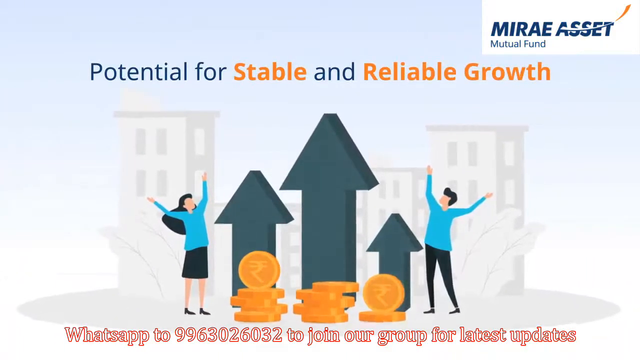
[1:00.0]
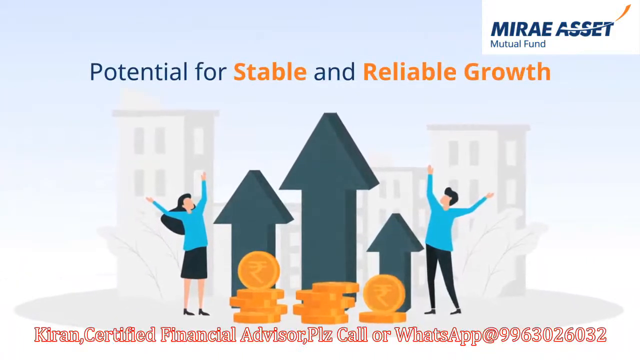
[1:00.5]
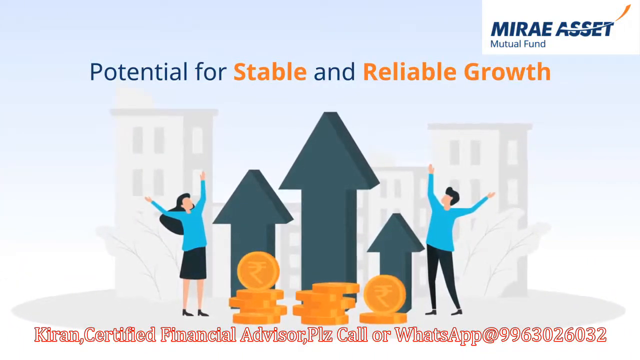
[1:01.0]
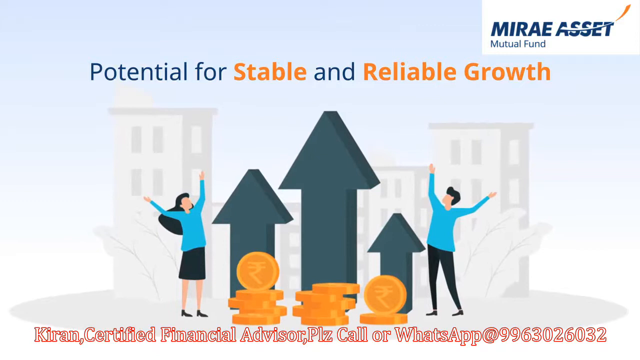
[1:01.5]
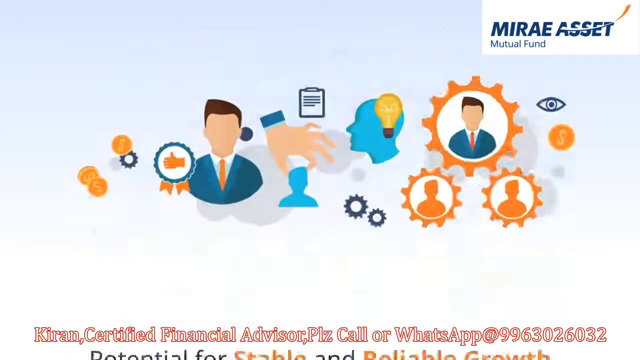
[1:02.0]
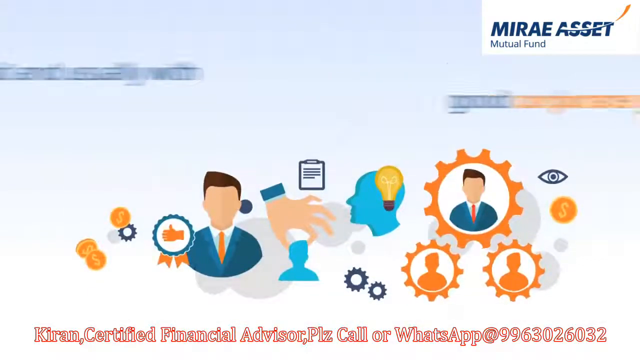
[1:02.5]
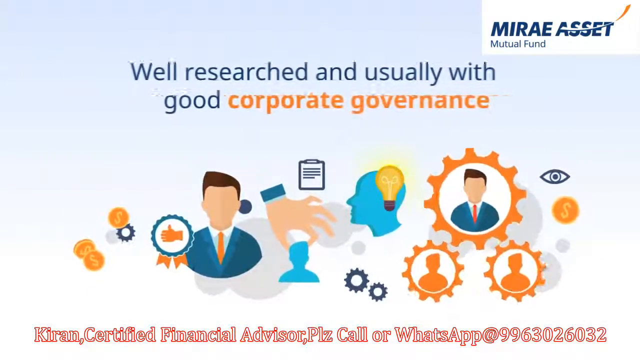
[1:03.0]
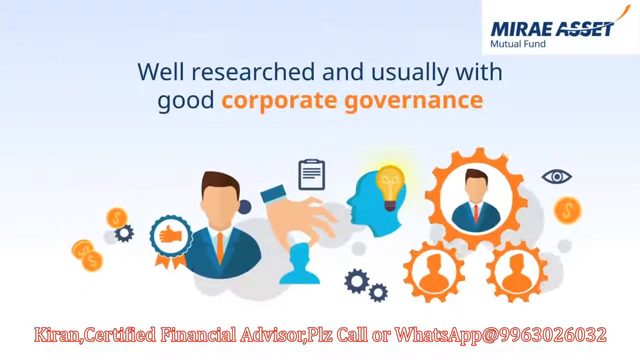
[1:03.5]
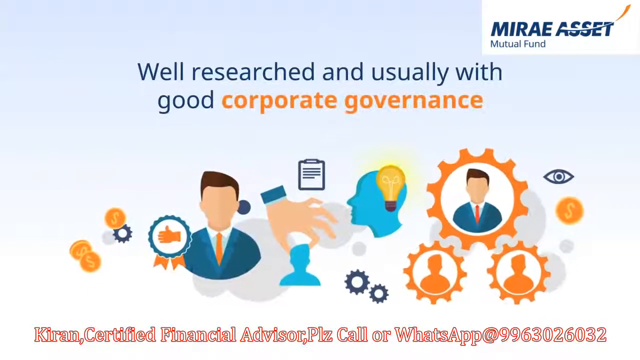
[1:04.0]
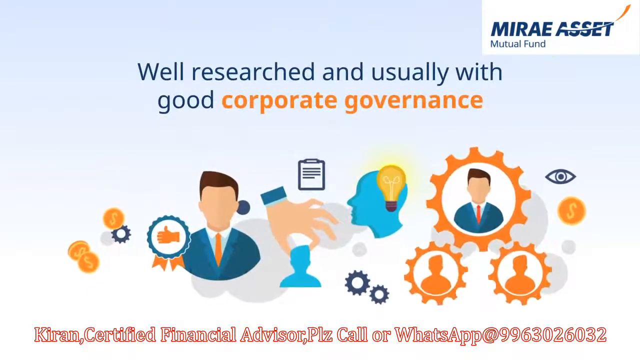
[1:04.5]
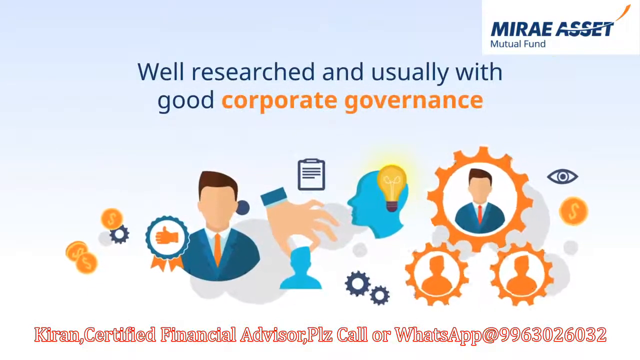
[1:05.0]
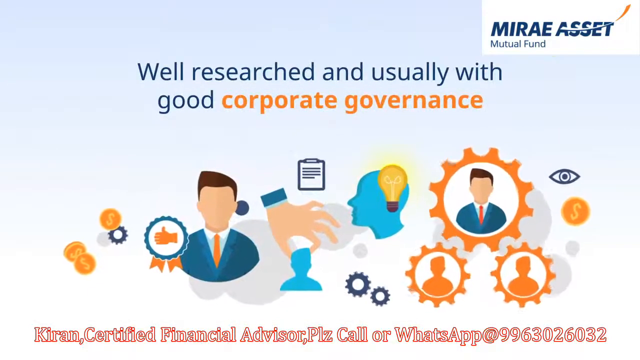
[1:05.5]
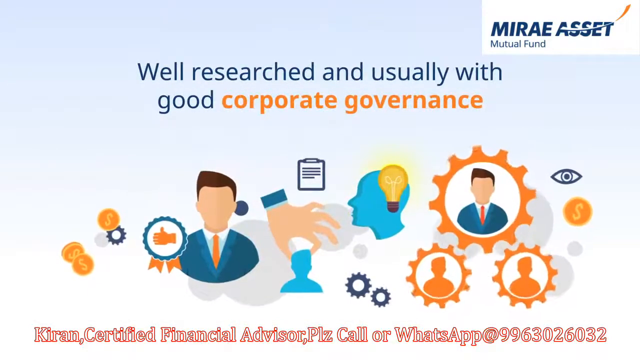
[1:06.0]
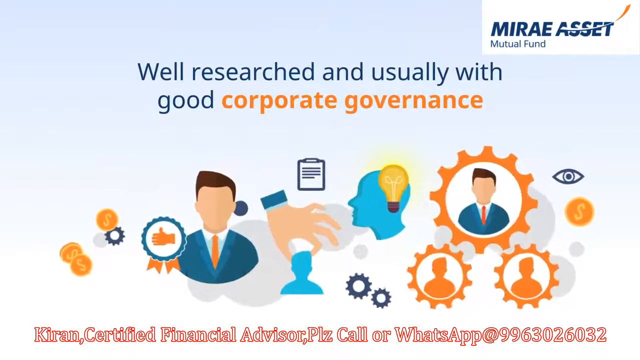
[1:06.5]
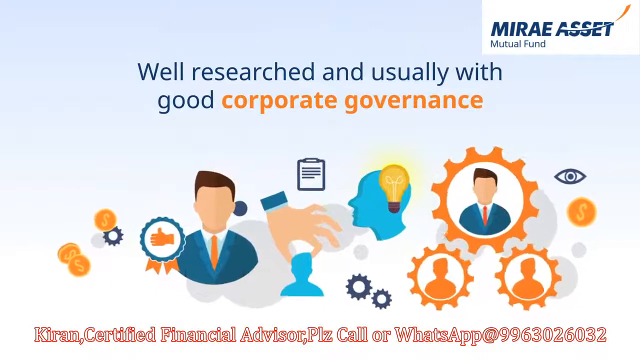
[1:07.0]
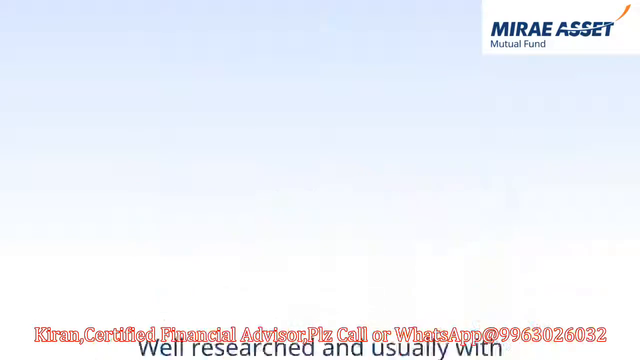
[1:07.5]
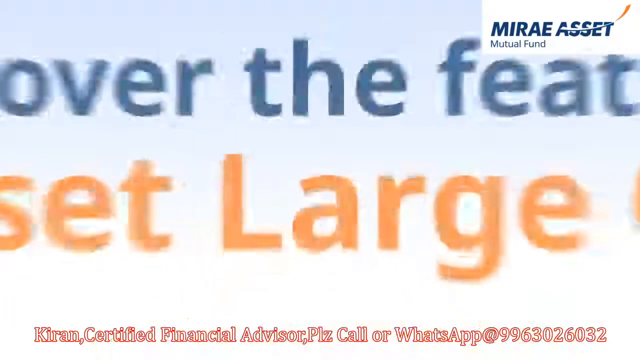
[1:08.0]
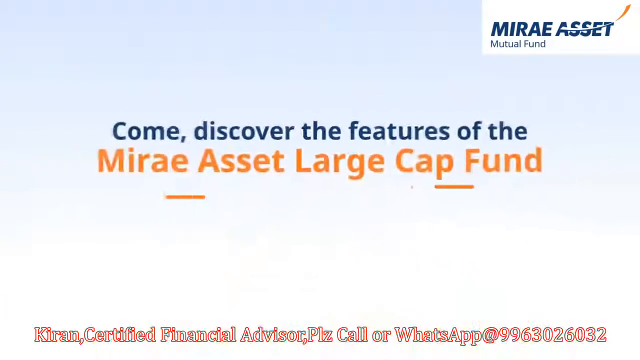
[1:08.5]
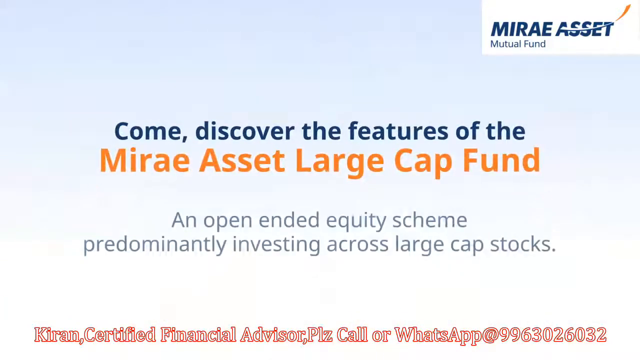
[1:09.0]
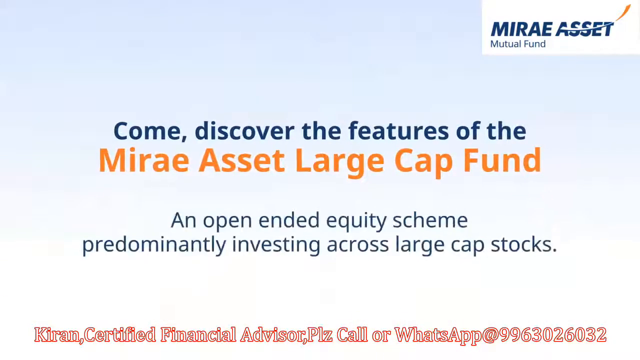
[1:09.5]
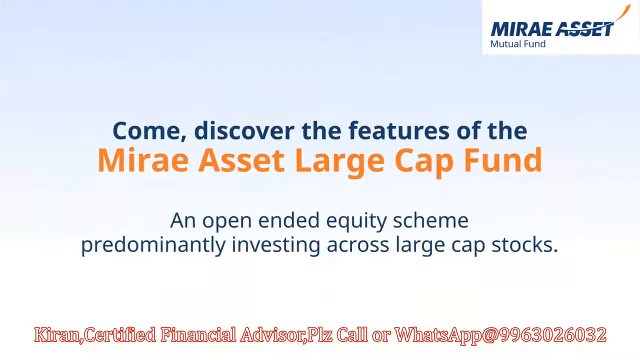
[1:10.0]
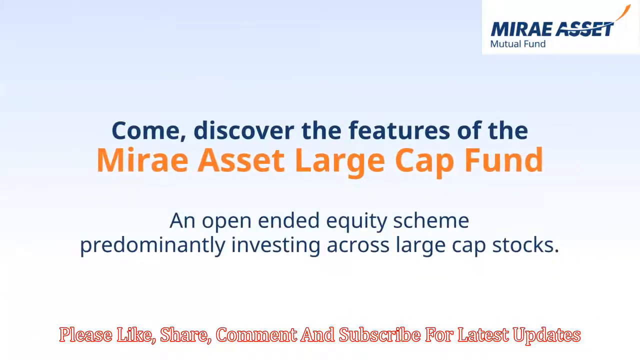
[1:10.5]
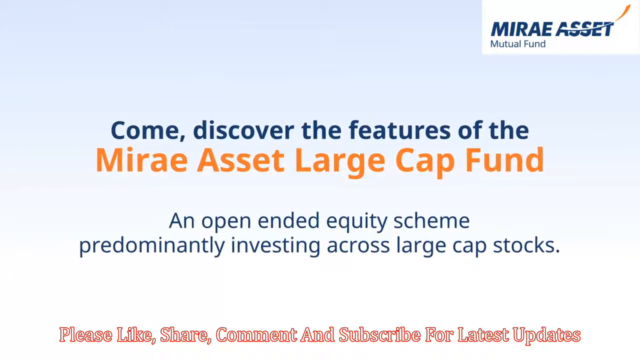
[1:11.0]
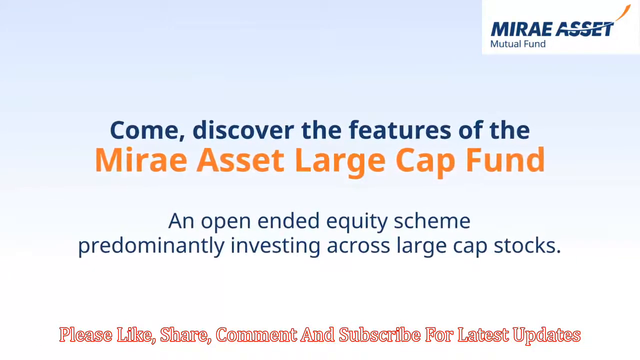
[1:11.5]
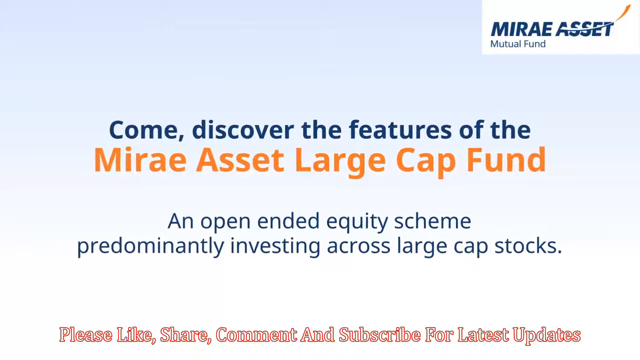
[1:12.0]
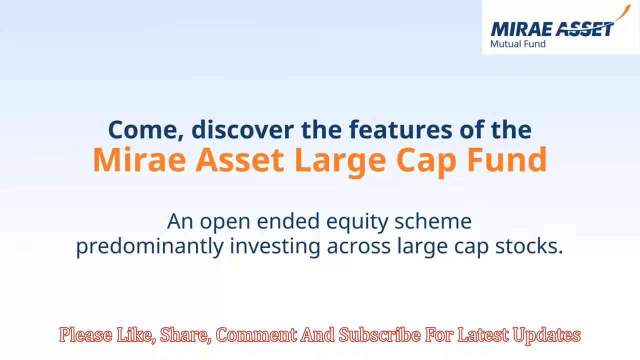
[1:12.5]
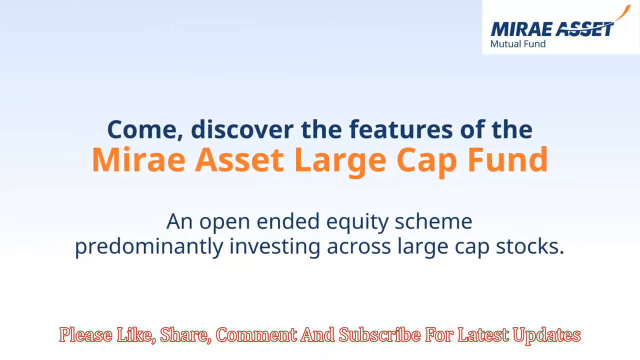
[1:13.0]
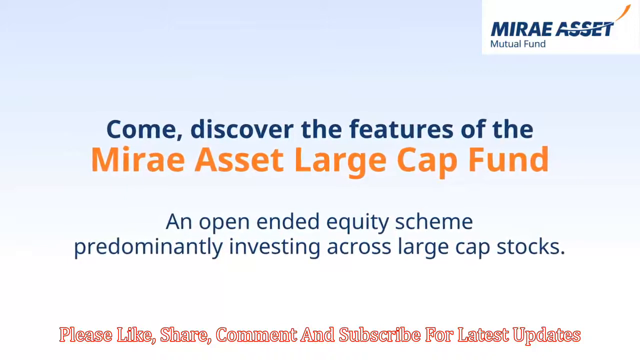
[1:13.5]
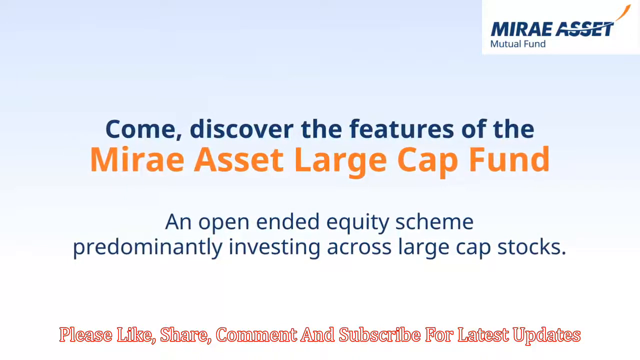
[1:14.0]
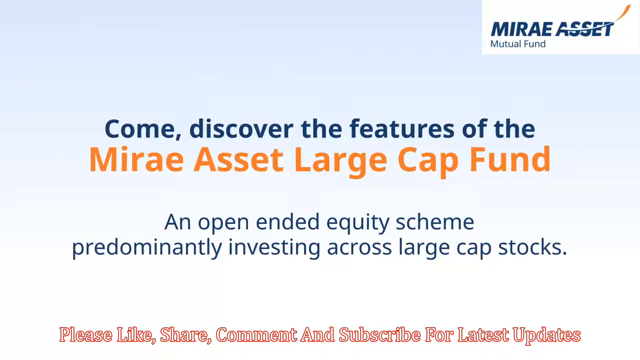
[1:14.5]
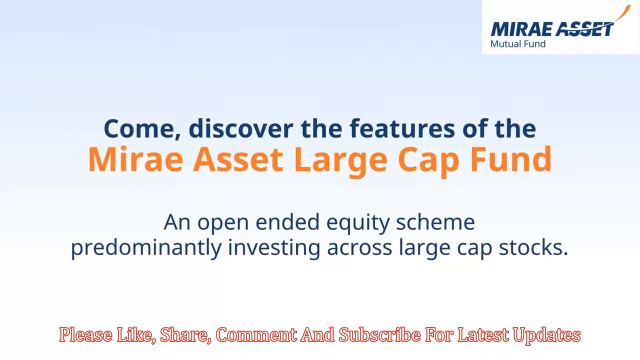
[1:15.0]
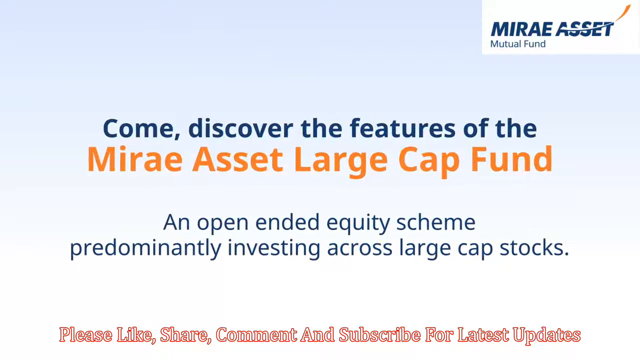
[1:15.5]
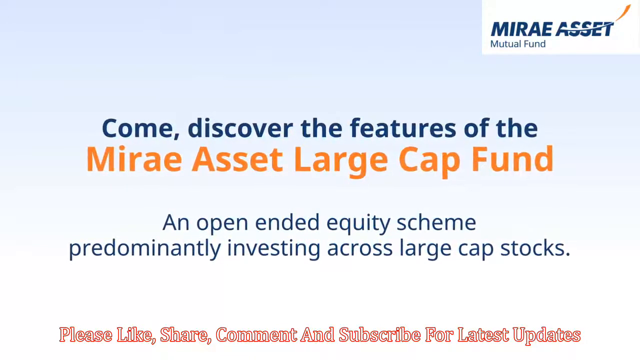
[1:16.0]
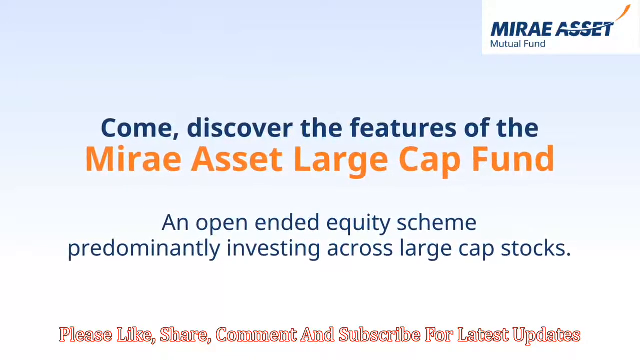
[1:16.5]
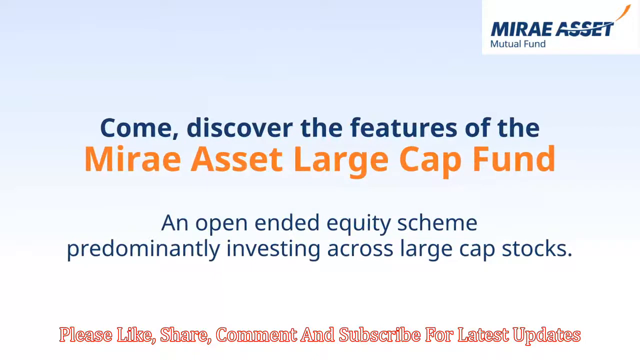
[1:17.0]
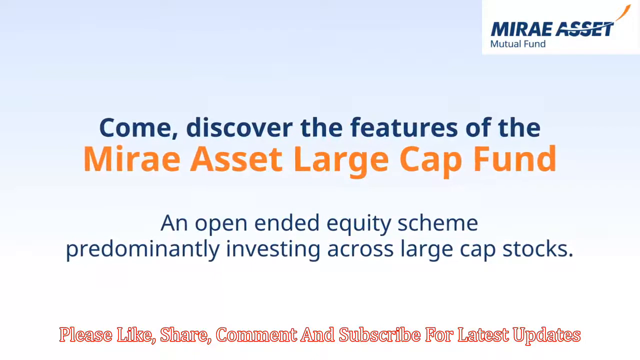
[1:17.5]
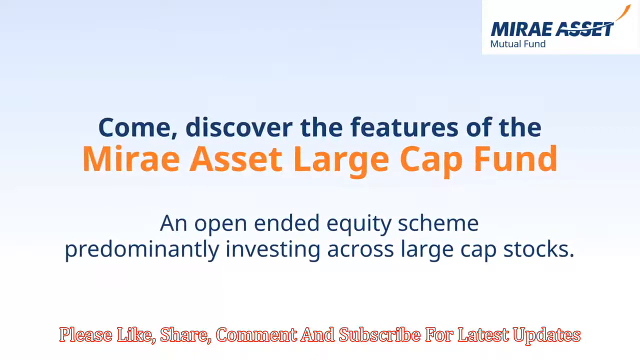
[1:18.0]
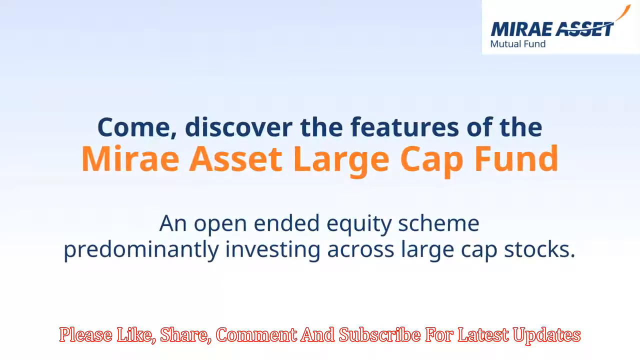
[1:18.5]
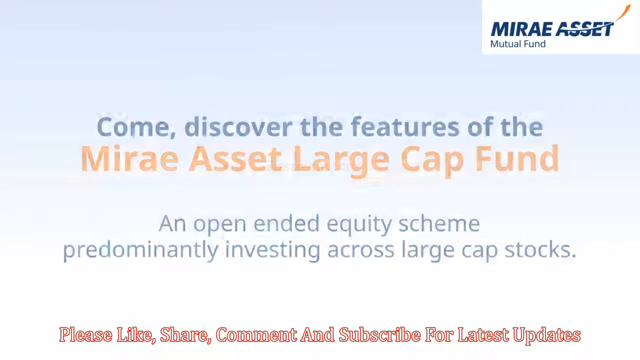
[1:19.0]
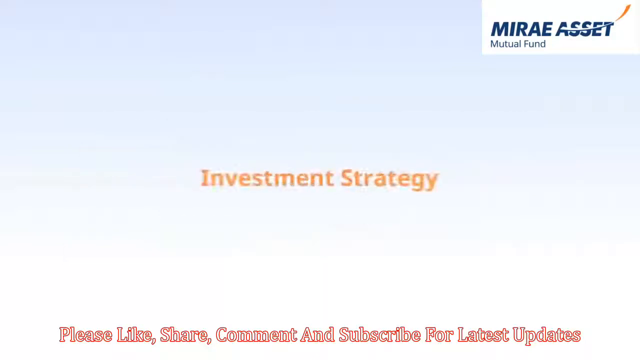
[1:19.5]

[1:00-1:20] Slightly low-level buildings are in the background. A woman on the left has her hands up and wears a blue top and a black skirt, with long dark black hair. There are three black arrows: a medium-sized one pointing up, a middle one, and a shorter one on the right, each with what appear to be gold coins stacked underneath; the first and third have a coin facing forward. A woman on the right-hand side wears black pants and a blue top, has short black hair, and also has her arms up. The next screen shows a scattering of icons: two faceless heads of men with the top part of a blue suit and an orange tie, a hand grabbing a blank blue head, a blue head with a yellow lightbulb in it, several orange coins, and a faceless man inside an orange cog with two orange people in smaller cogs below him. The text "Well researched and usually with good corporate governance" is at the top, with "corporate governance" in orange and the rest in blue. The Mirae Asset Mutual Fund logo remains in the top right corner. The next screen has "Come, discover the features of the Mirae Asset Large Cap Fund" written at the top, with "Mirae" in orange, and underneath in smaller text "An open ended equity scheme predominantly investing across large cap stocks".